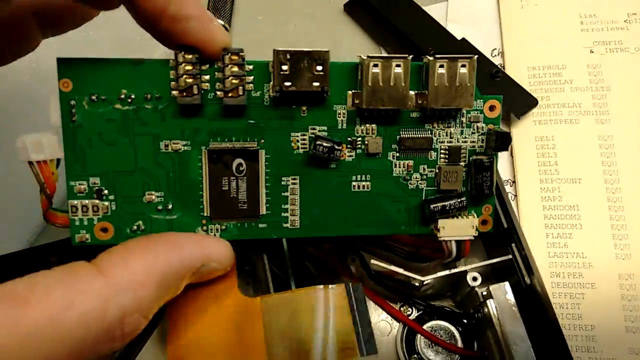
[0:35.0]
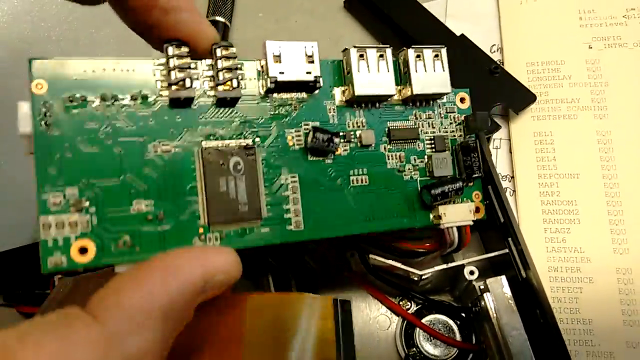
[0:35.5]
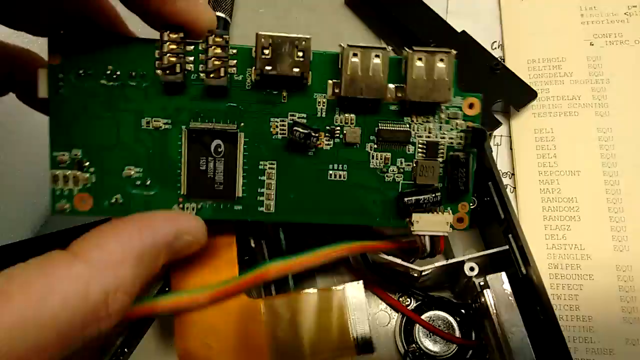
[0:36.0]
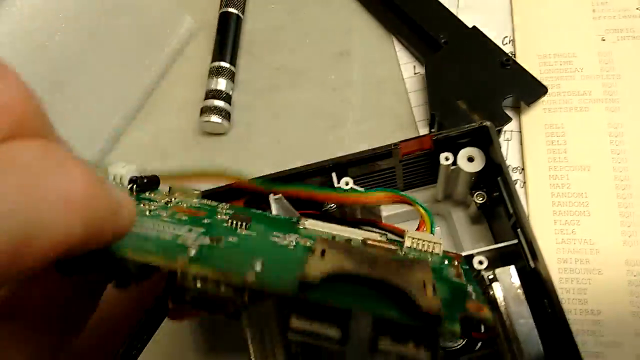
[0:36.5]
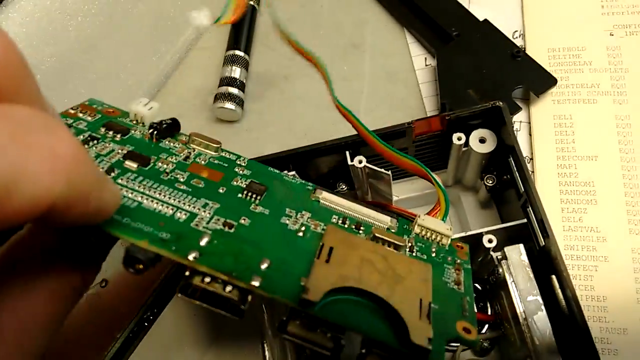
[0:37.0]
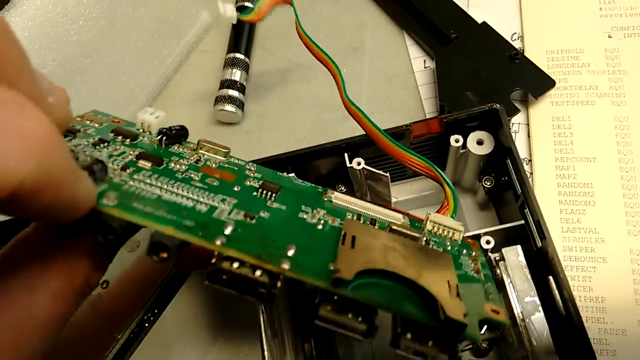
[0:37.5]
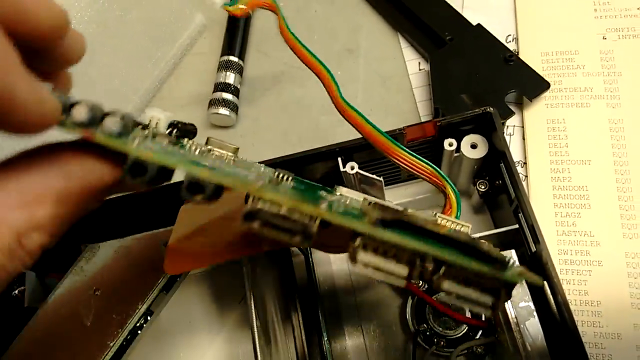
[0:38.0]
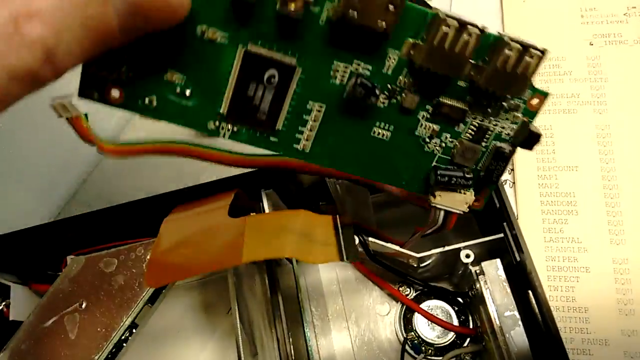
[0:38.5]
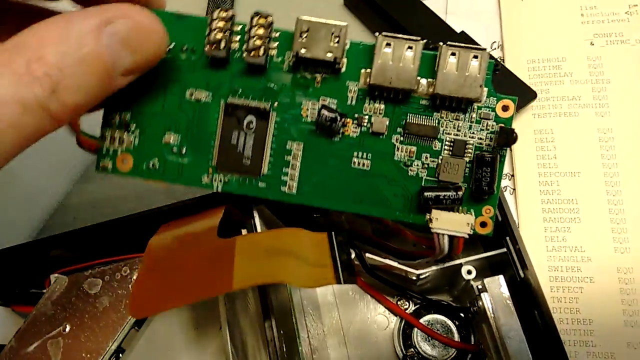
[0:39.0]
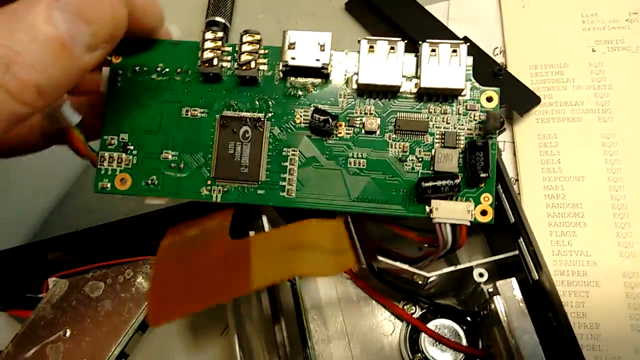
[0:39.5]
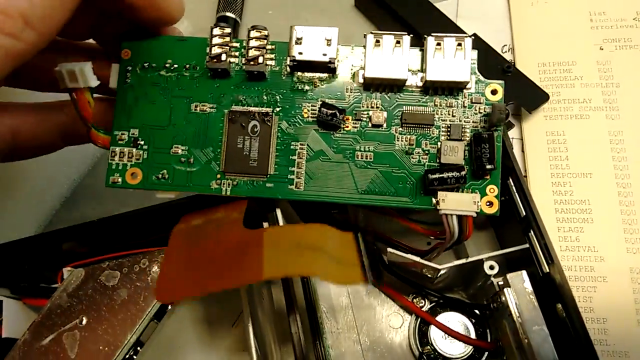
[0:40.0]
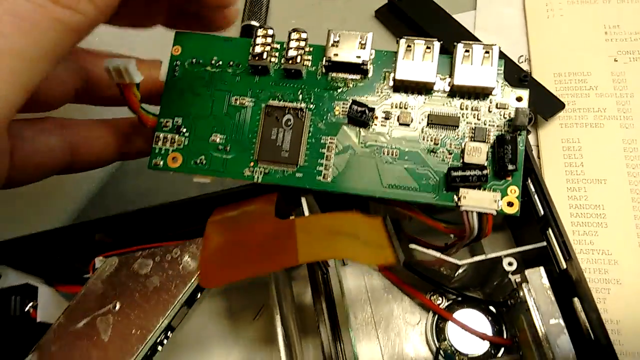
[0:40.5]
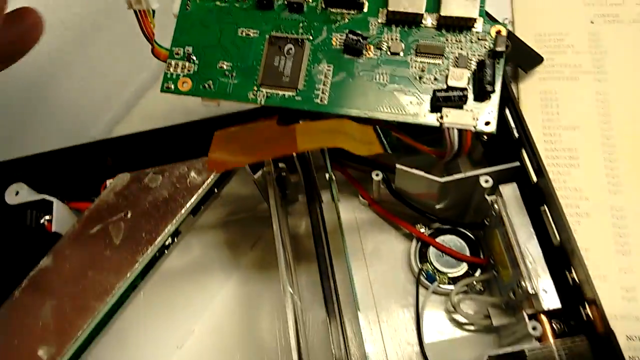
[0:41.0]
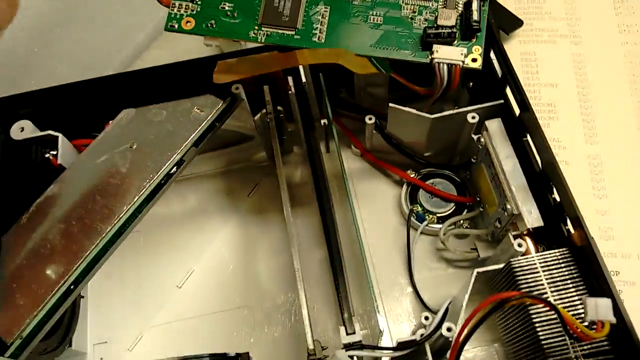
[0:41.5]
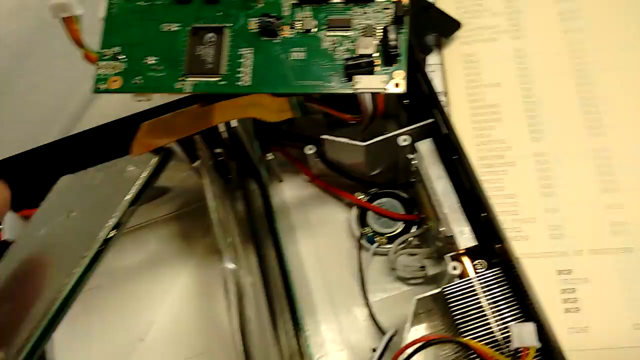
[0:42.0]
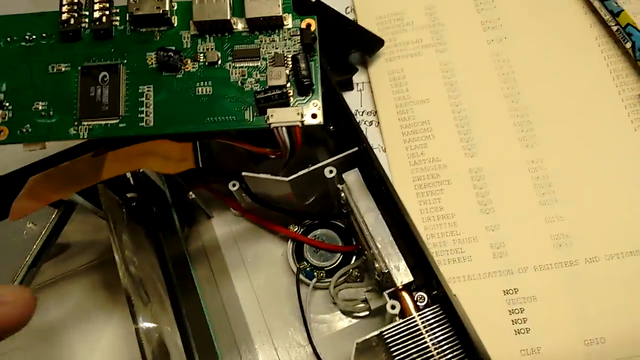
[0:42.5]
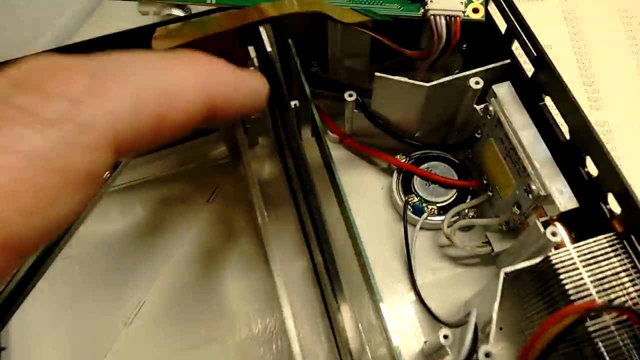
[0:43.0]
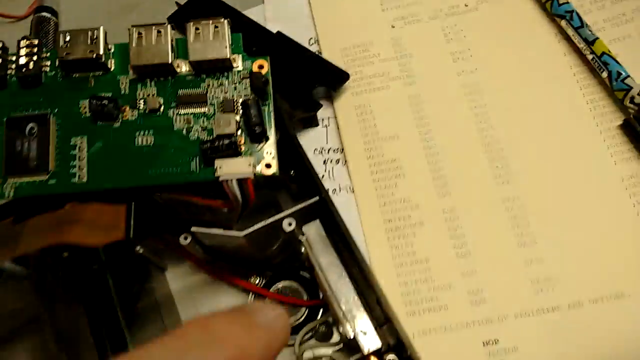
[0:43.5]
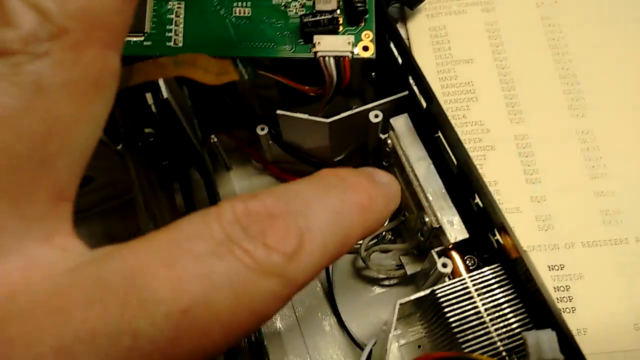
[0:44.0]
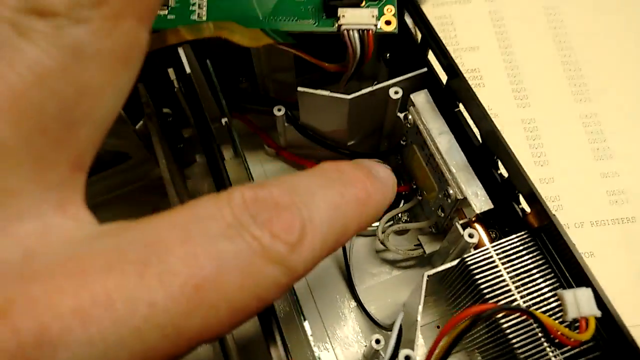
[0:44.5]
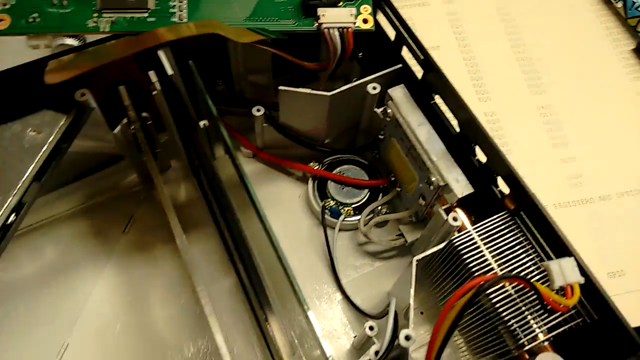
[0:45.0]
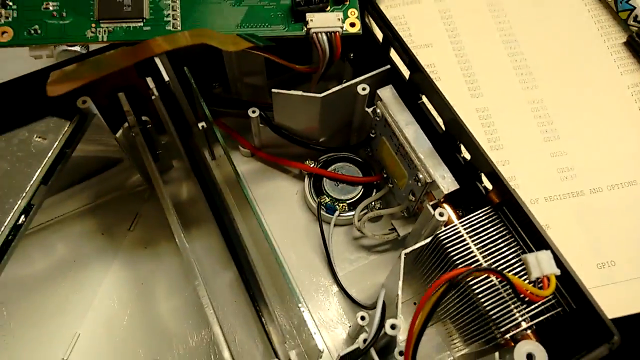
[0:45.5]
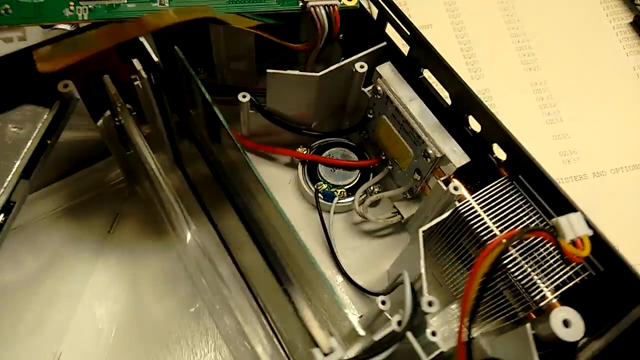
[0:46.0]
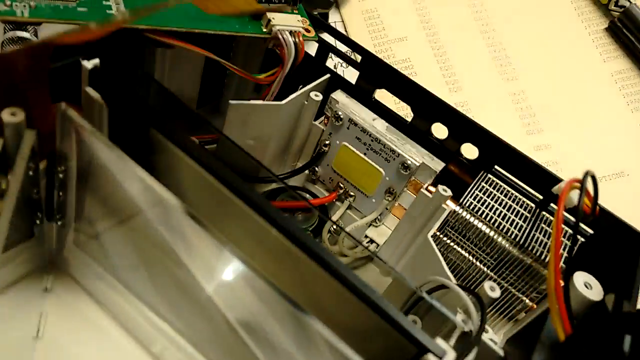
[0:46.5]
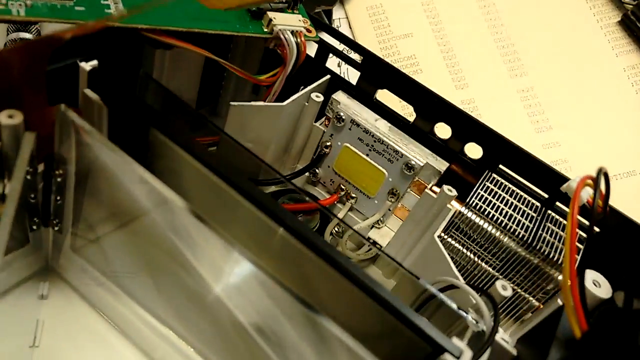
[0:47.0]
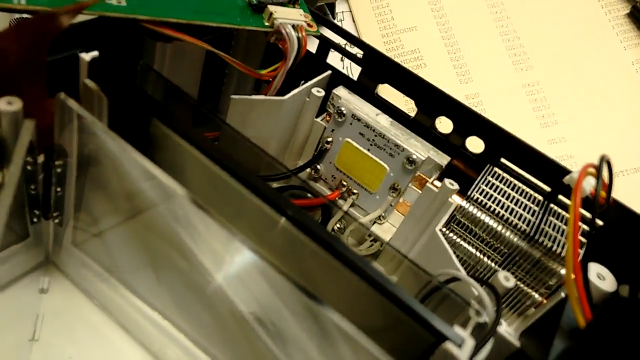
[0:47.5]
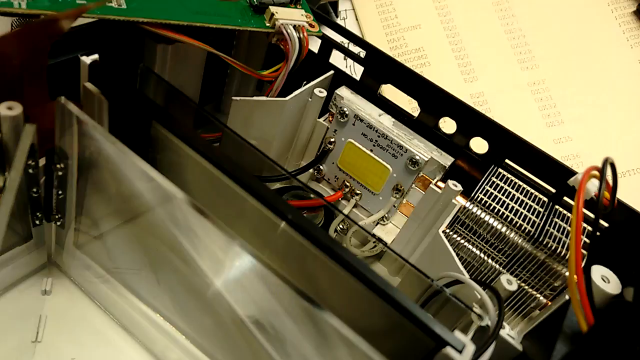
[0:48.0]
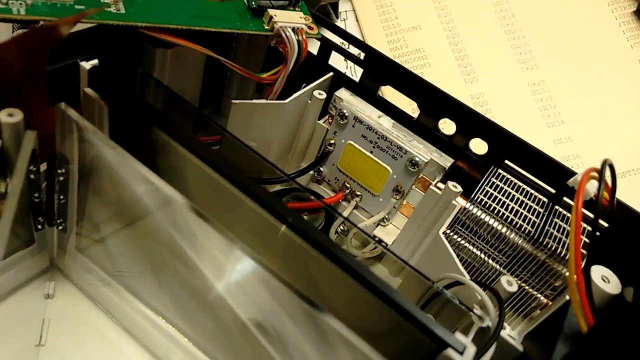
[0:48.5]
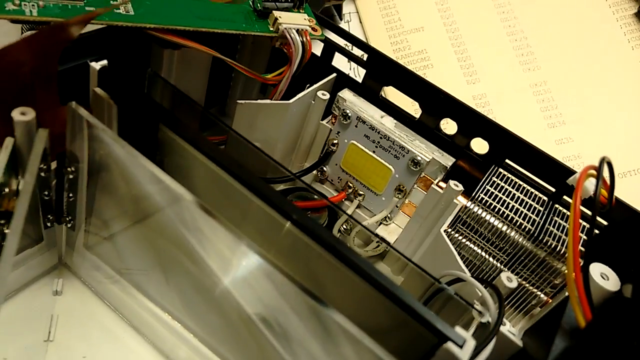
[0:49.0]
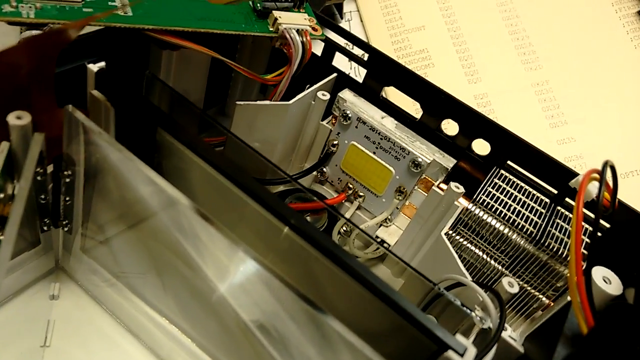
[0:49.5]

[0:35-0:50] A Caucasian male's hand works on the inside of the device, which is suggested to be inexpensive. He now takes the components out, disconnecting the motherboard, the wires, the mirrors, and metal parts from the inside of the device. He pans across to show the tools he is using and paperwork and diagrams next to the device. He seems to go into more detail on the left and right of the device, shows how the components go back inside, then lays them on top of the device and continues to point out different aspects.